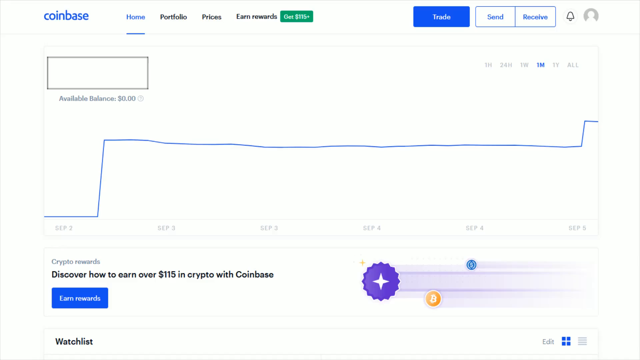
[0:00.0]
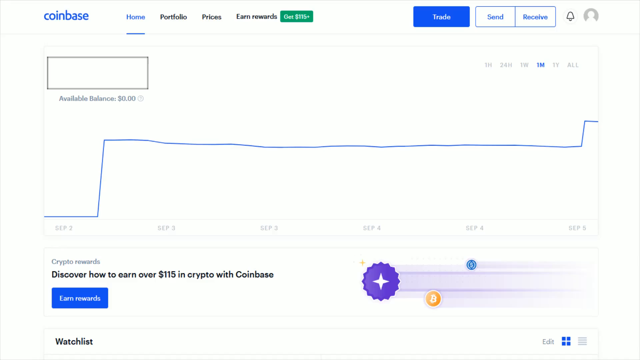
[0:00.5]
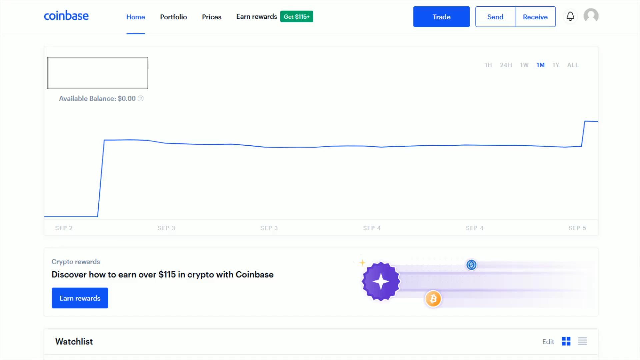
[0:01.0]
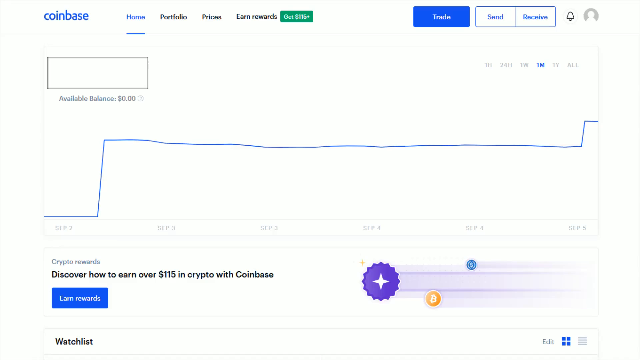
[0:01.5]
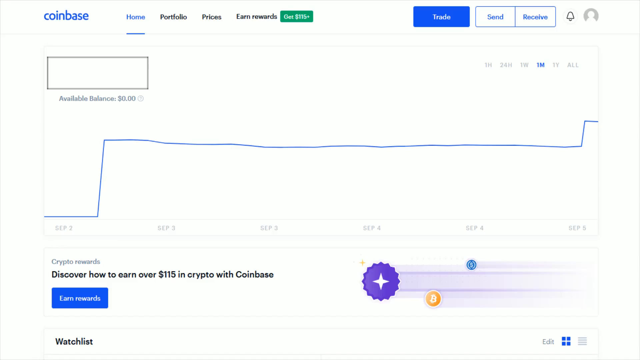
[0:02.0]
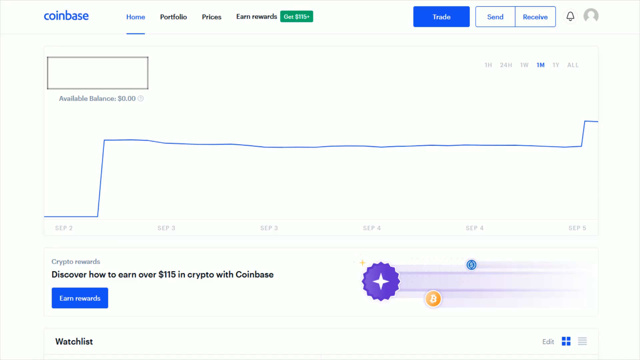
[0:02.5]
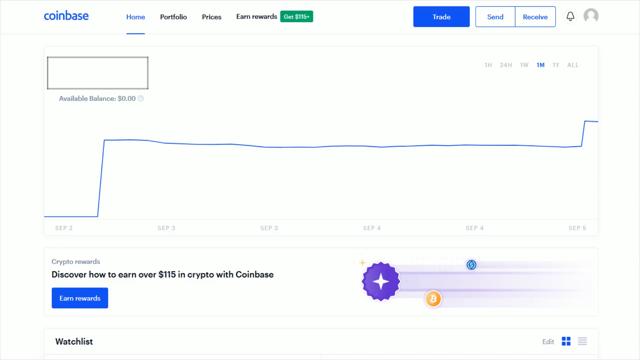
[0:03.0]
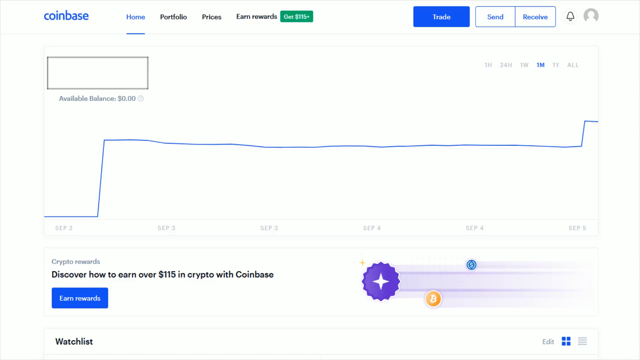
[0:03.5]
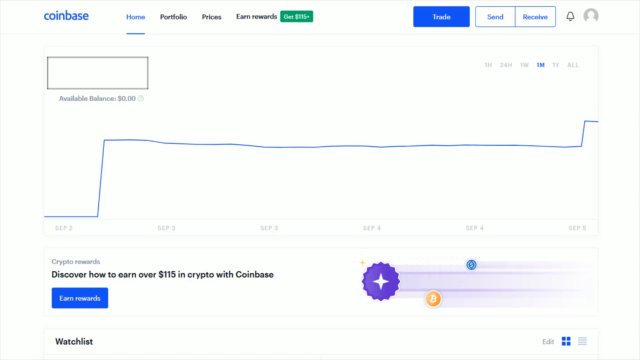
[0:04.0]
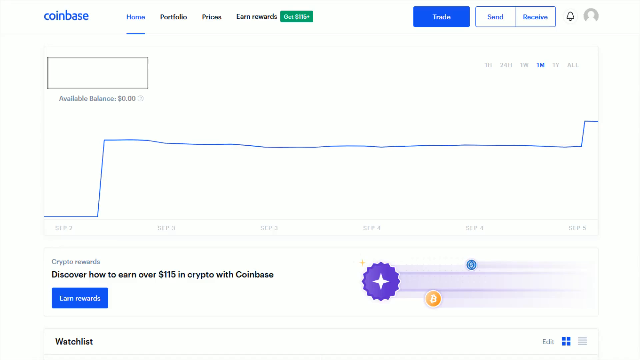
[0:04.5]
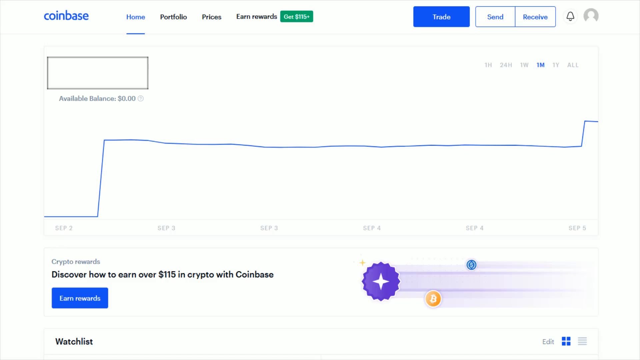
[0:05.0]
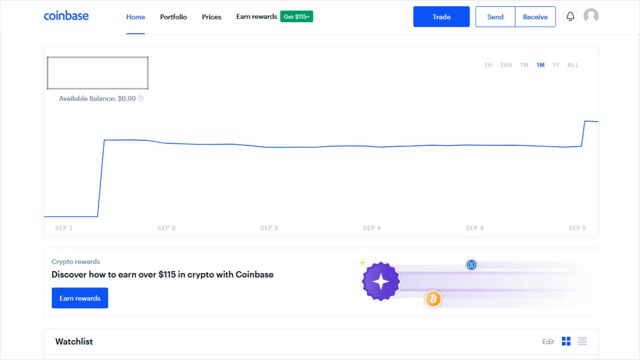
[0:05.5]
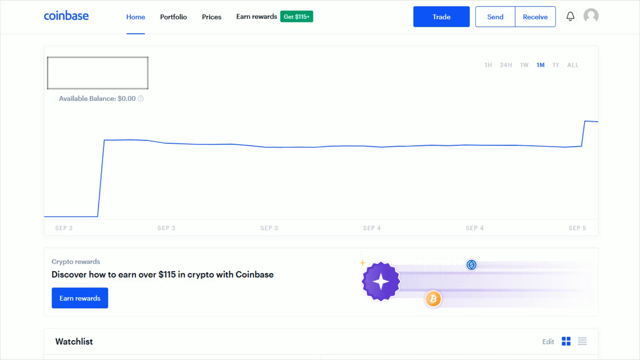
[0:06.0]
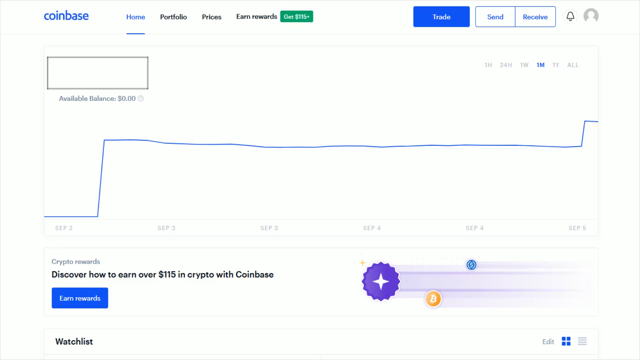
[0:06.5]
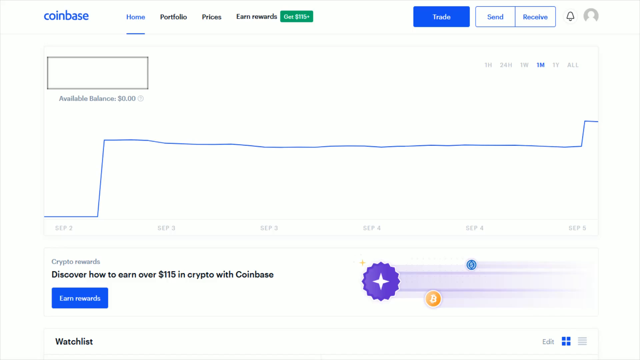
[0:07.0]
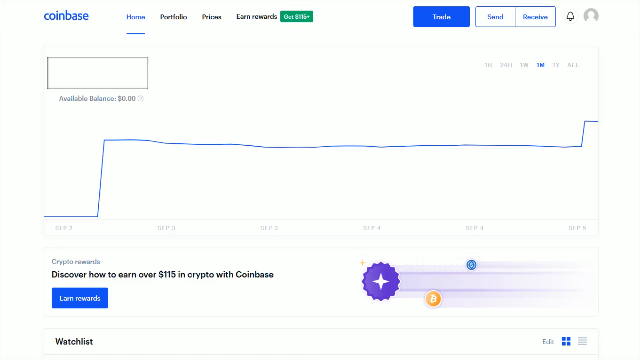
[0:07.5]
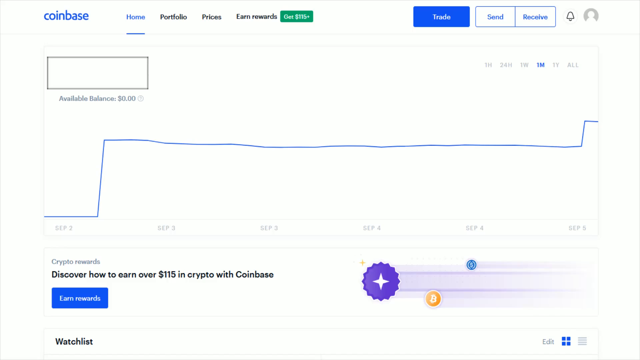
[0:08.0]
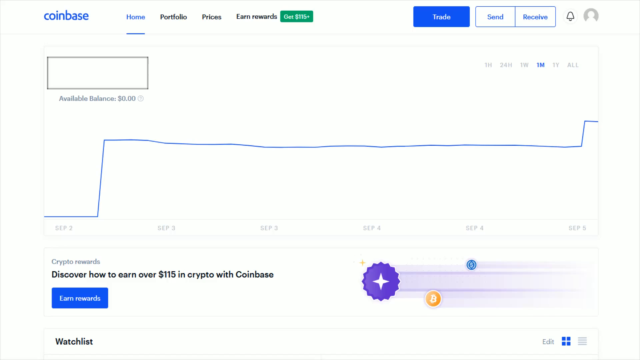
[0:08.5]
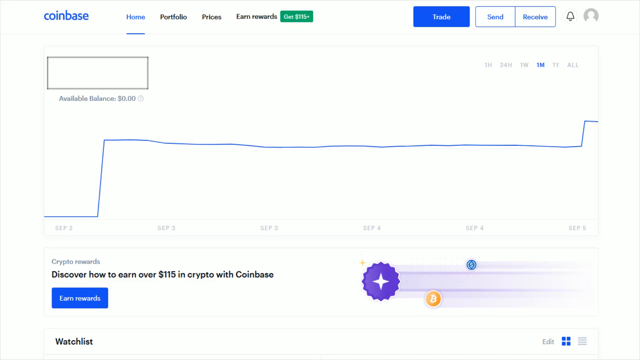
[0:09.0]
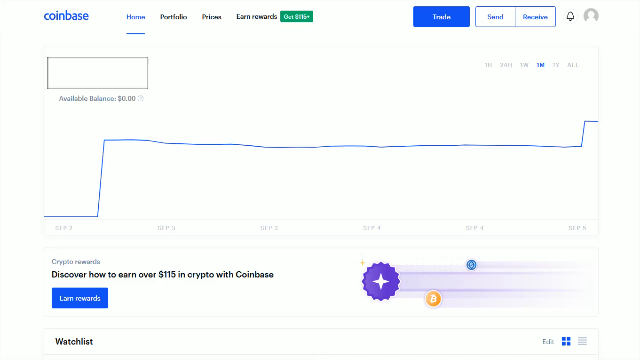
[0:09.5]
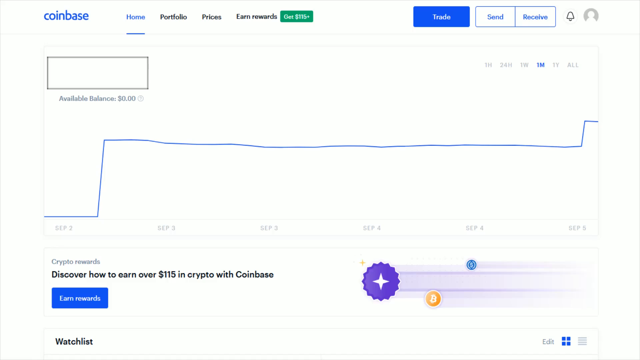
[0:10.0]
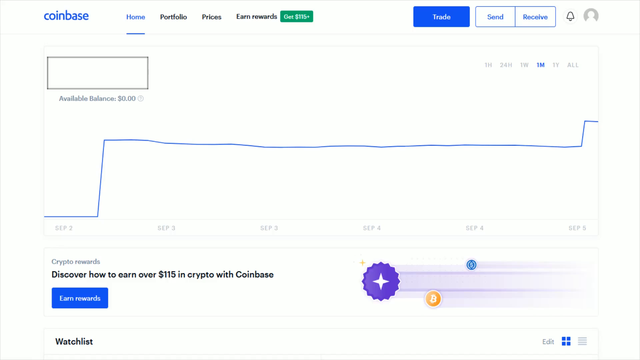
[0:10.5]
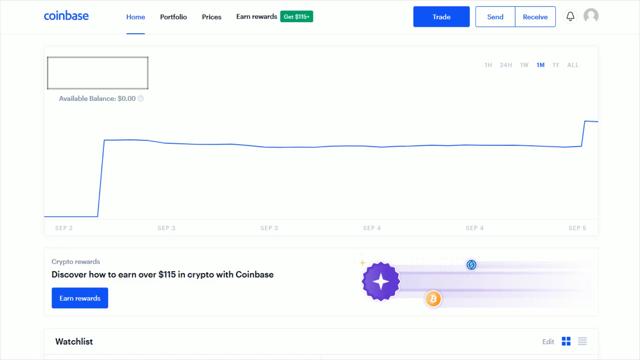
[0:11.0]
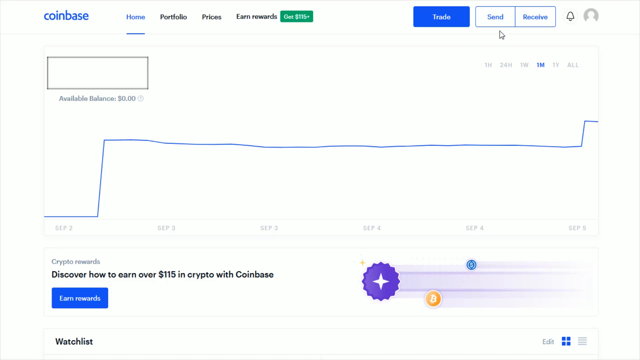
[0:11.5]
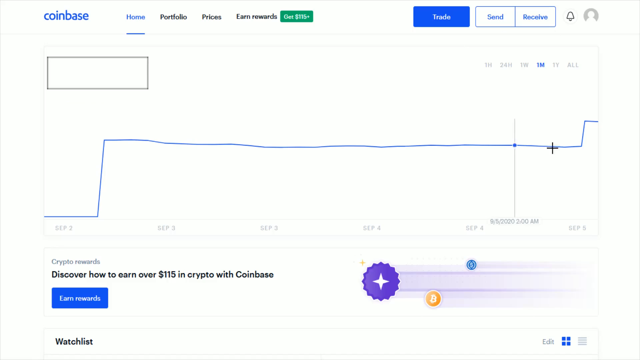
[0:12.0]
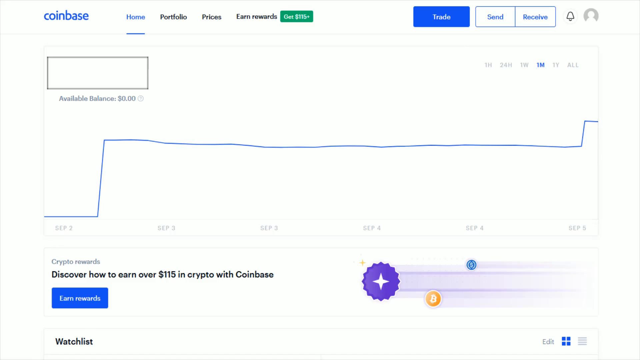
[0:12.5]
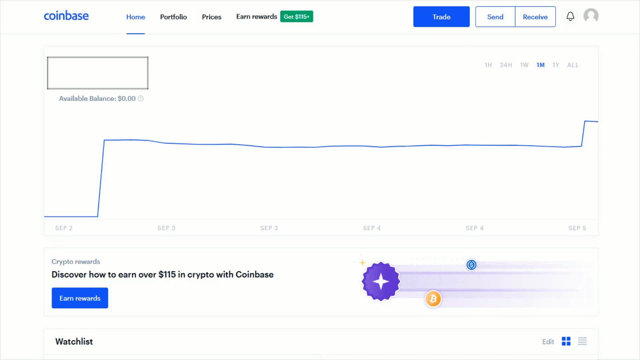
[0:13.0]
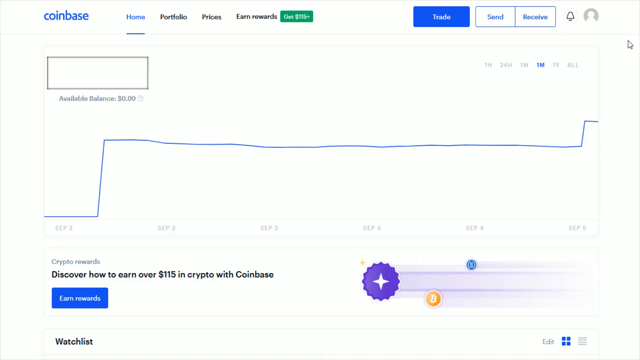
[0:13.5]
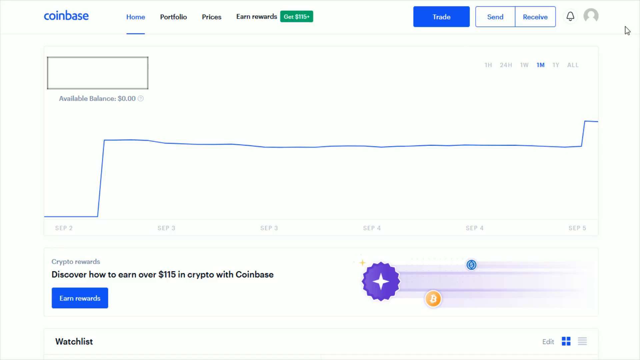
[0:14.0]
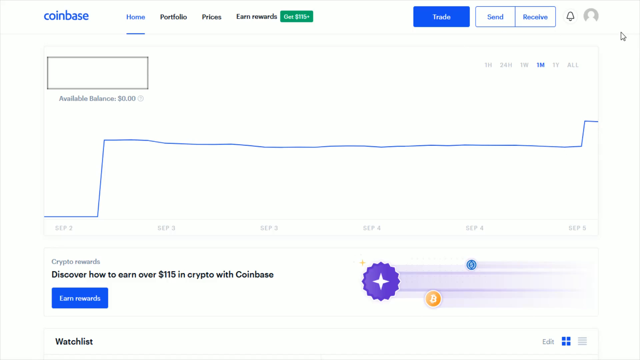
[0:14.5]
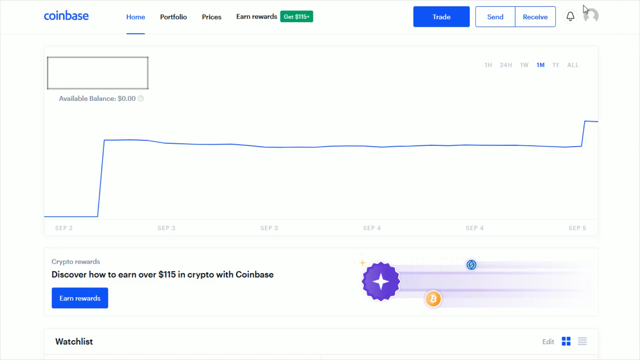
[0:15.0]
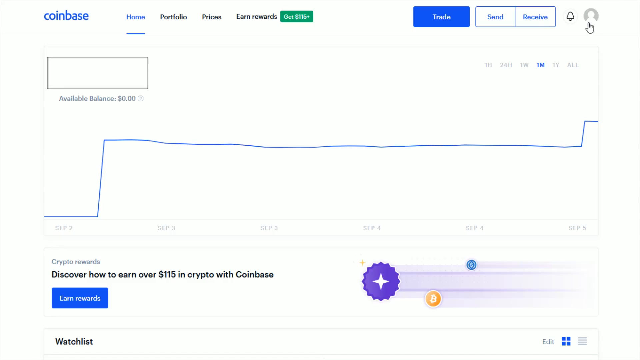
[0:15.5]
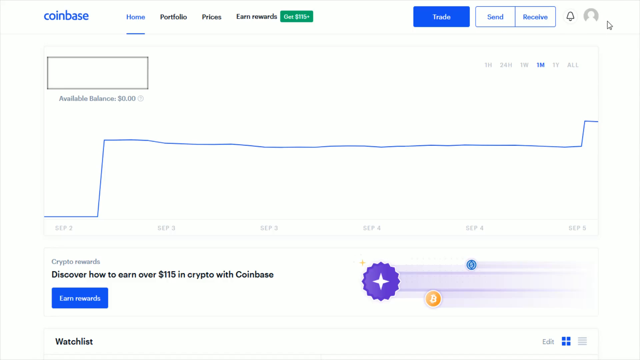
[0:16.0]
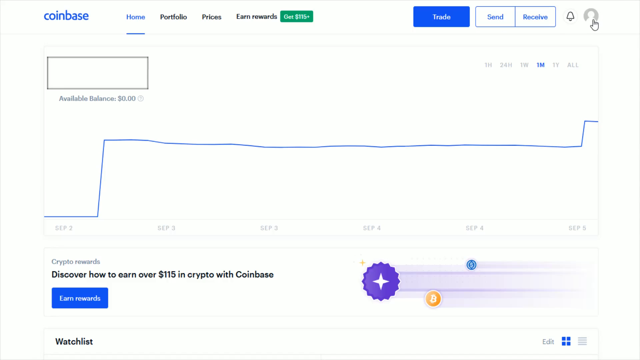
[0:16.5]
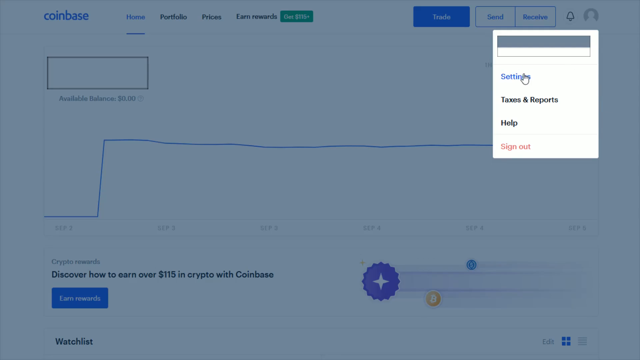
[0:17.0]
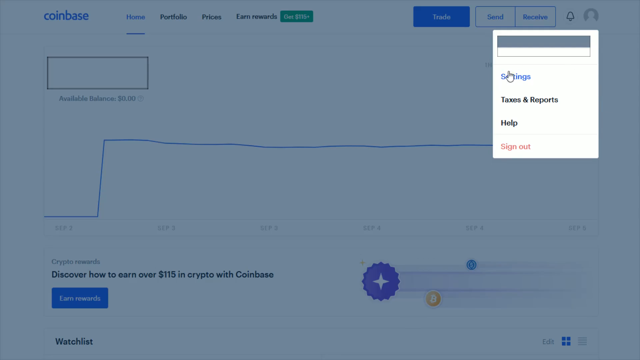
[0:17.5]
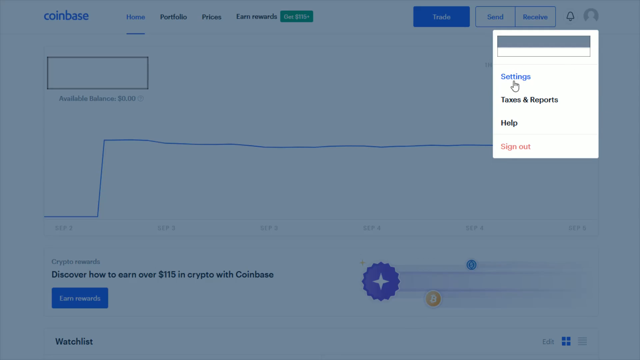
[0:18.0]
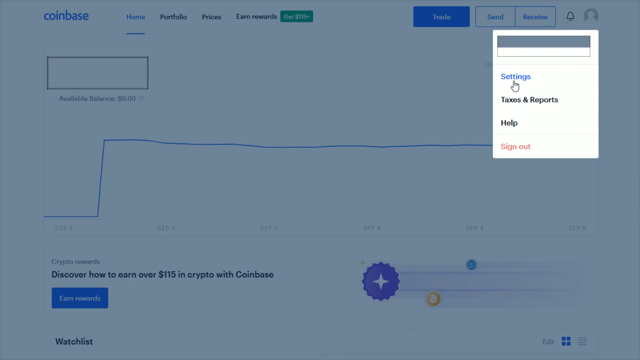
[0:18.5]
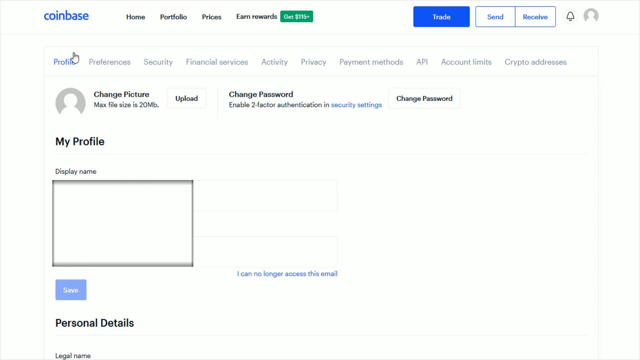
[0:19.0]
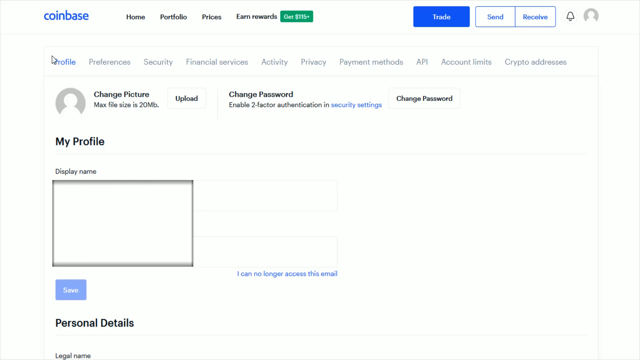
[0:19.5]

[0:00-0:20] A screen recording of the Coinbase app shows the available balance, which is zero. A watchlist is visible, and the profile is clicked. Settings are reached from the top right as the cursor hovers over the icon in the top right corner. The Coinbase logo is at the top left, and along the top of the screen are Home, Portfolio, Prices and Earn Rewards. In the middle is a graph of the account's available balance: it goes up, stays stable for a good while, then goes up again, and the available balance reads zero. At the bottom are the crypto rewards that can be earned. The graph has a pretty bright white background, and the profile icons are at the top right.